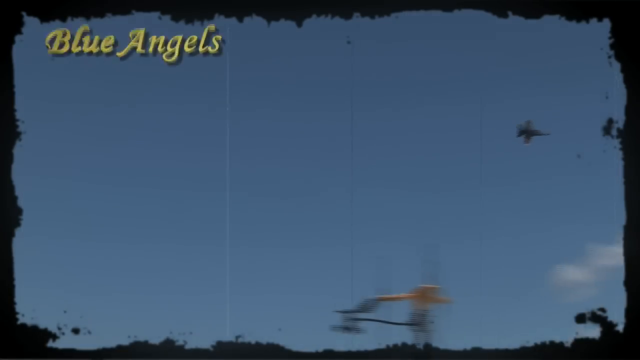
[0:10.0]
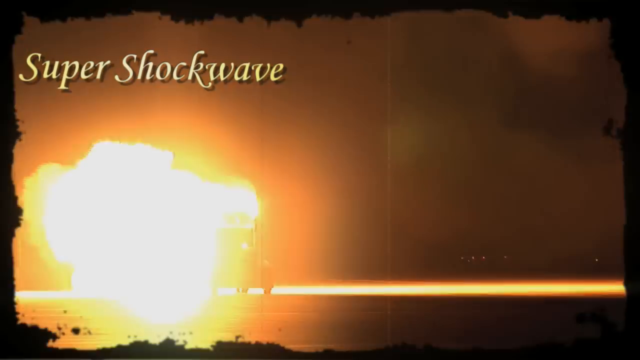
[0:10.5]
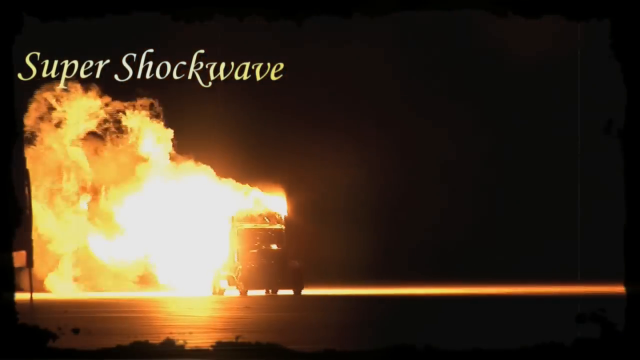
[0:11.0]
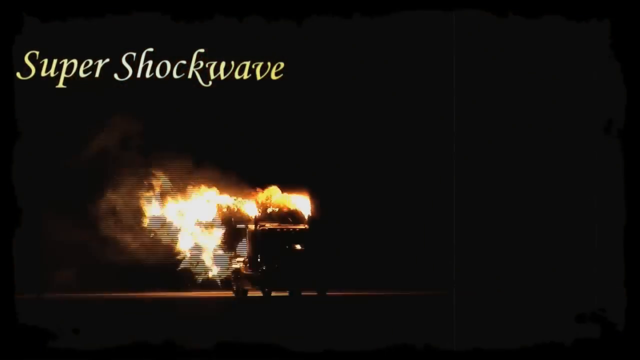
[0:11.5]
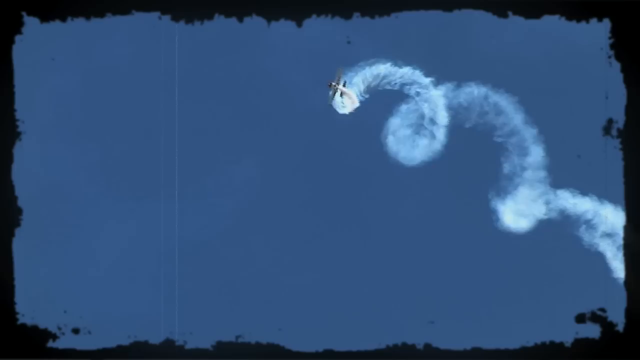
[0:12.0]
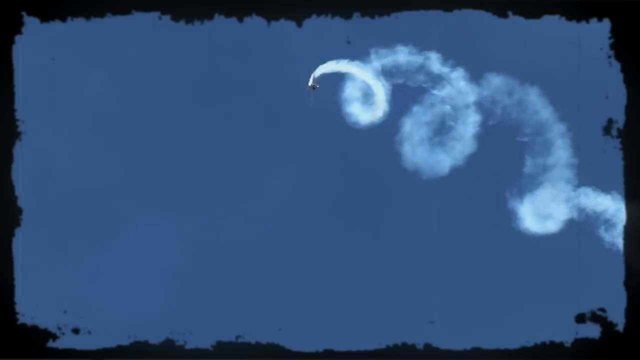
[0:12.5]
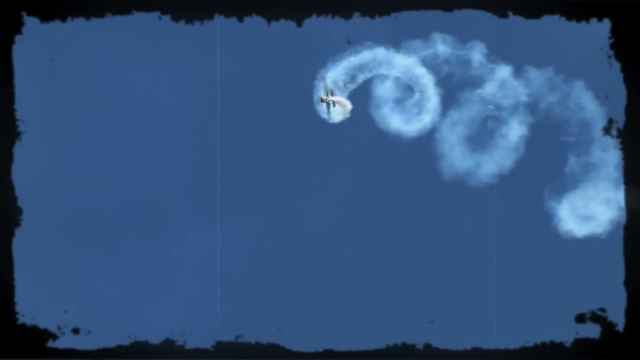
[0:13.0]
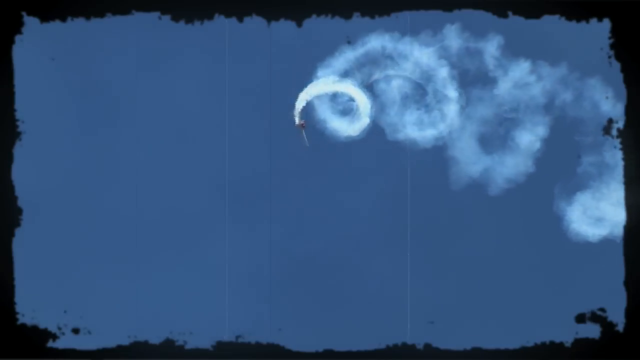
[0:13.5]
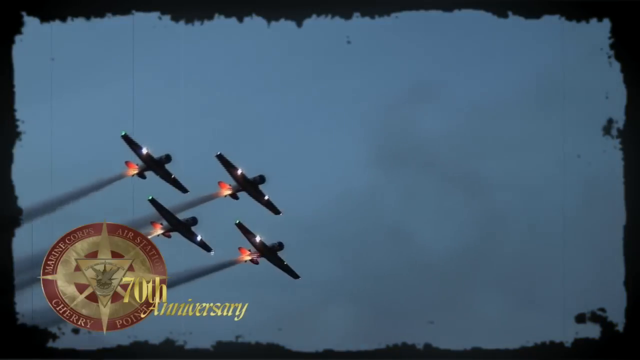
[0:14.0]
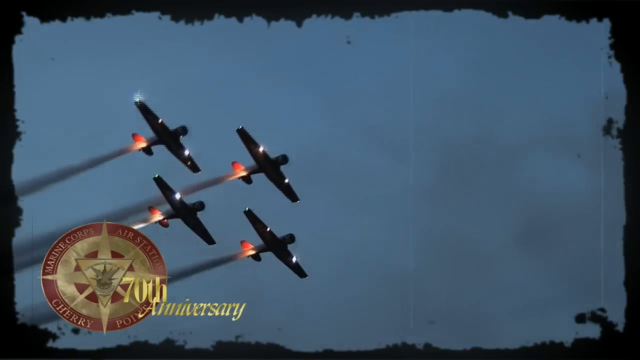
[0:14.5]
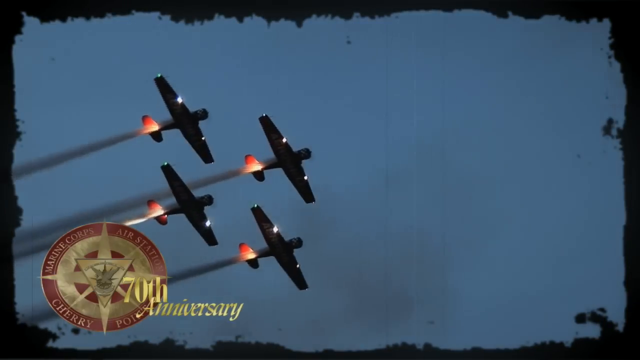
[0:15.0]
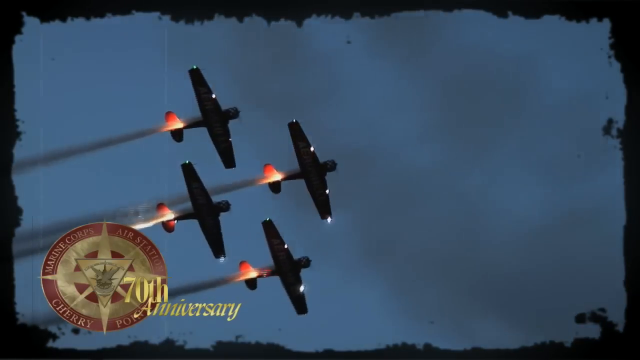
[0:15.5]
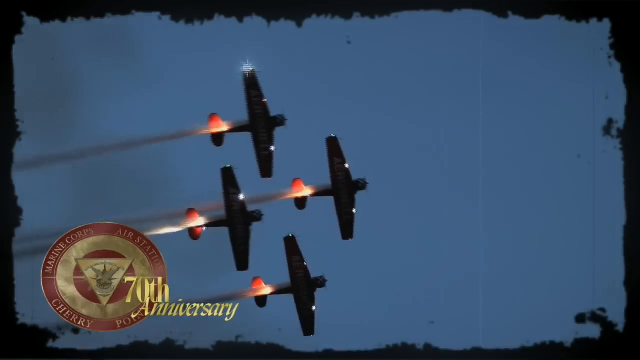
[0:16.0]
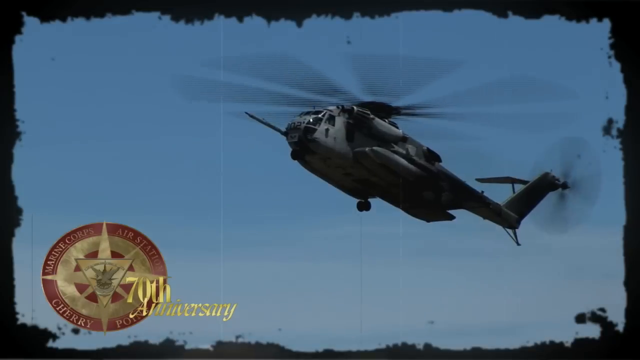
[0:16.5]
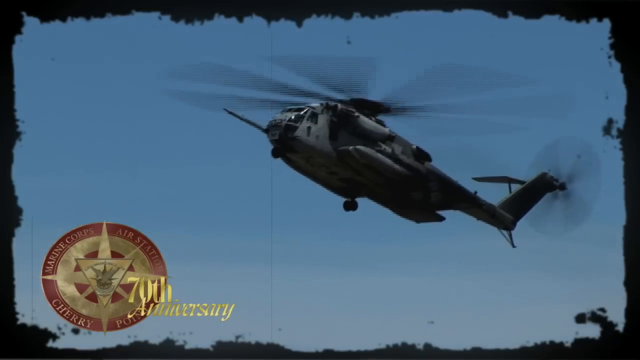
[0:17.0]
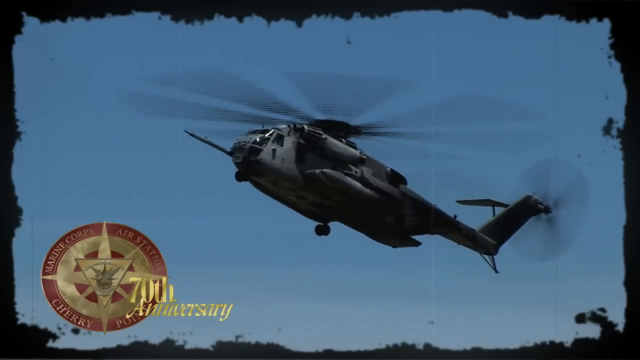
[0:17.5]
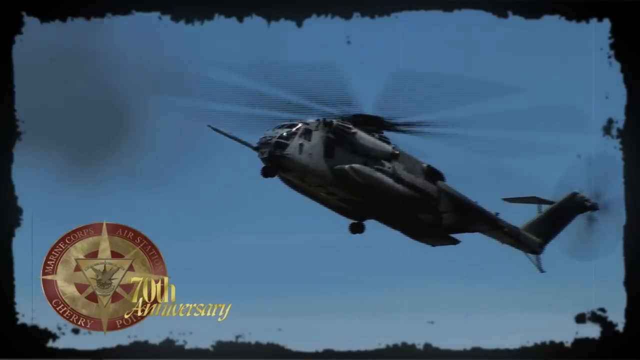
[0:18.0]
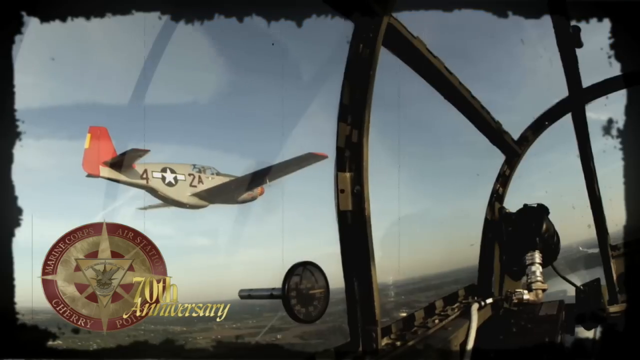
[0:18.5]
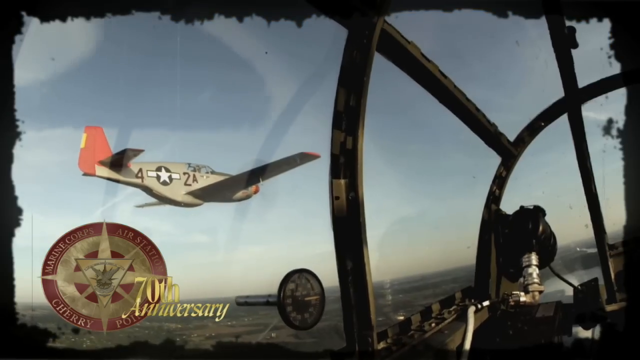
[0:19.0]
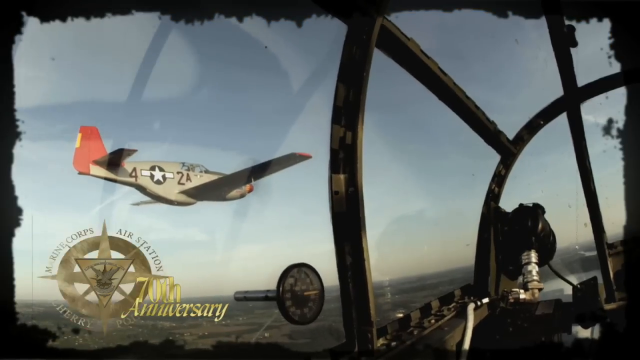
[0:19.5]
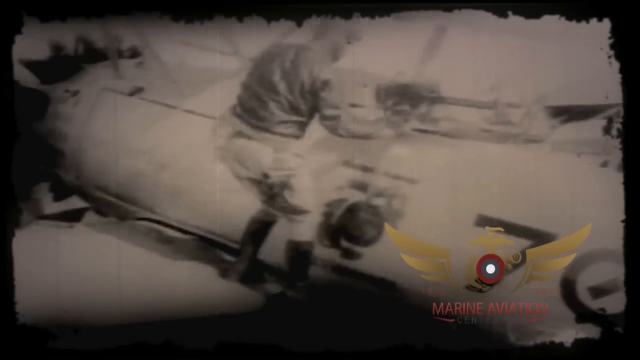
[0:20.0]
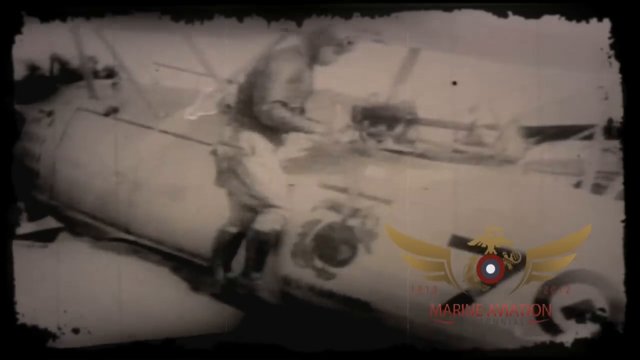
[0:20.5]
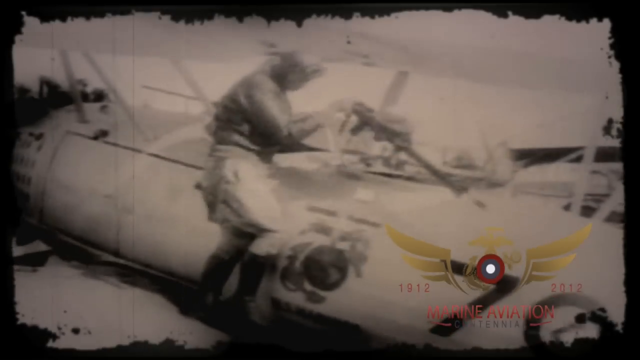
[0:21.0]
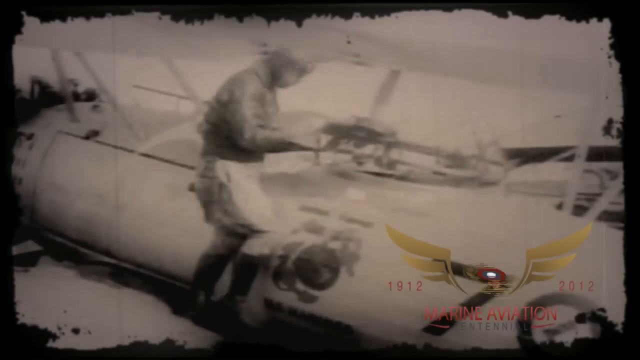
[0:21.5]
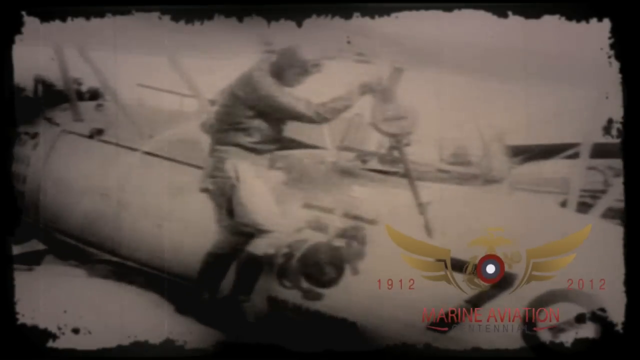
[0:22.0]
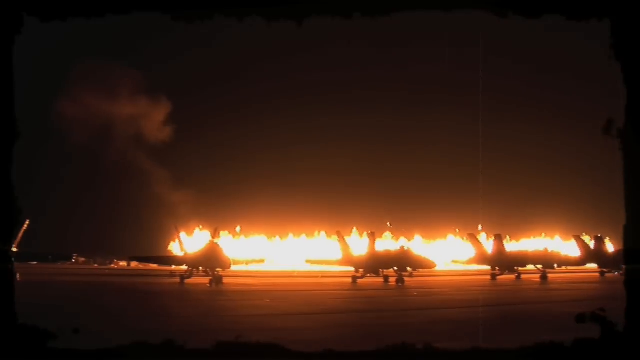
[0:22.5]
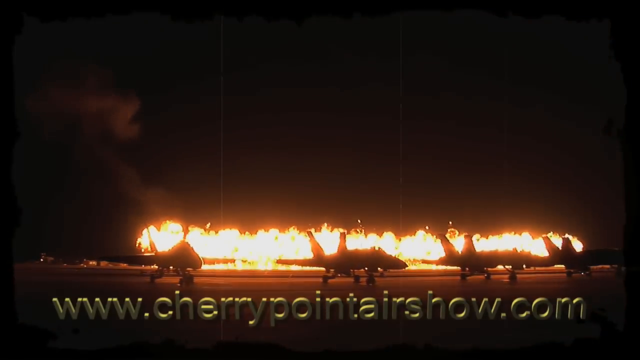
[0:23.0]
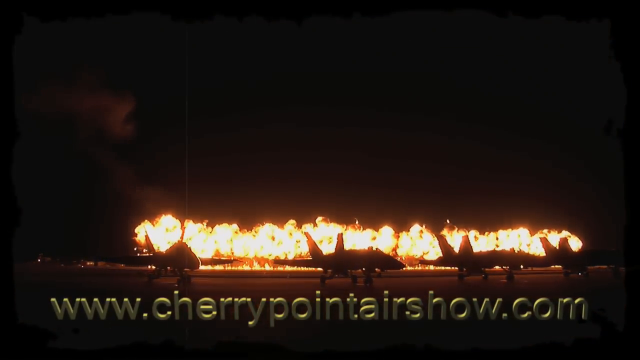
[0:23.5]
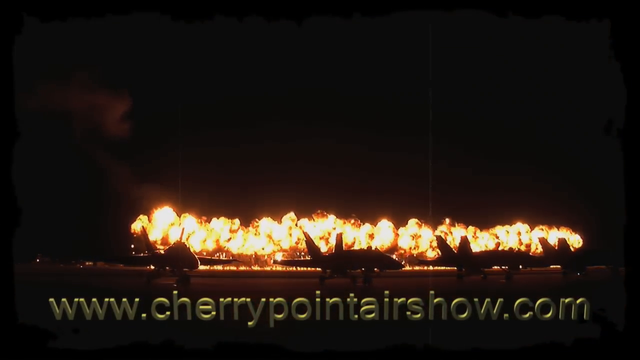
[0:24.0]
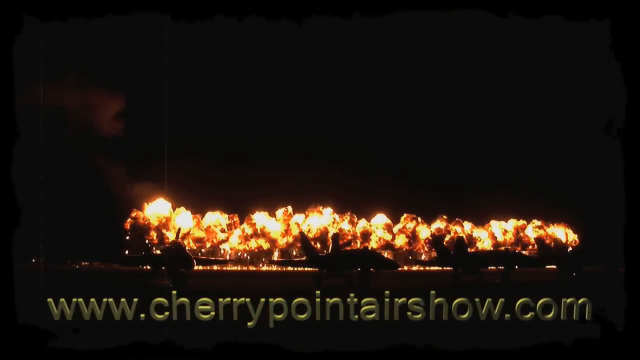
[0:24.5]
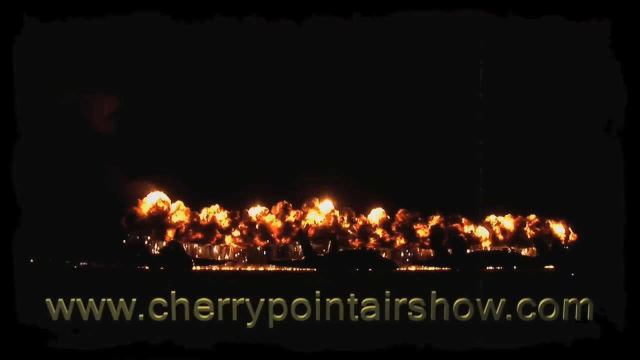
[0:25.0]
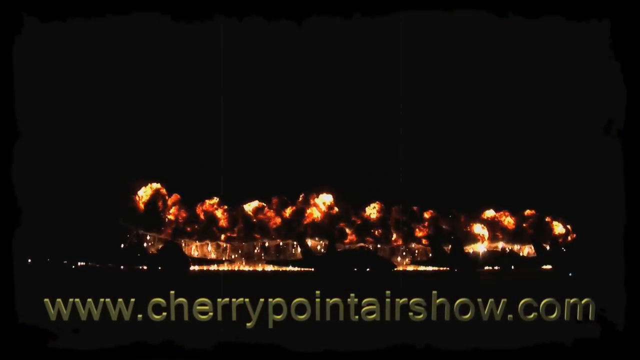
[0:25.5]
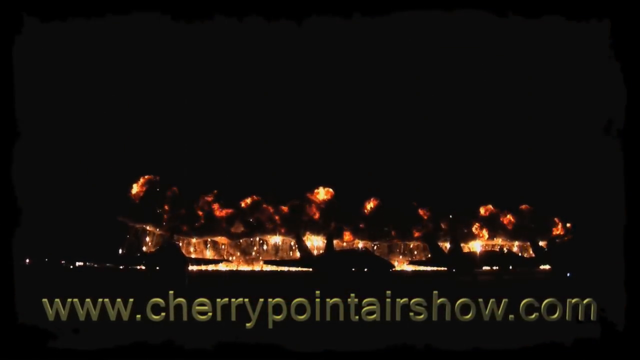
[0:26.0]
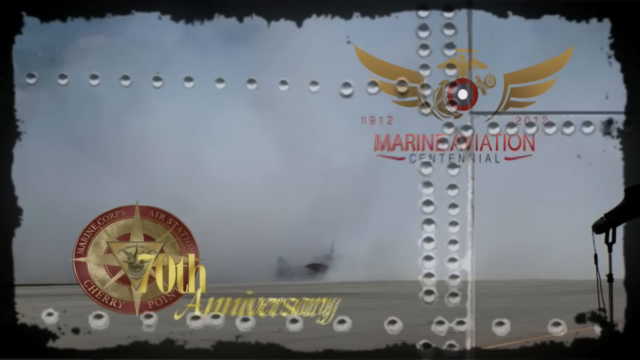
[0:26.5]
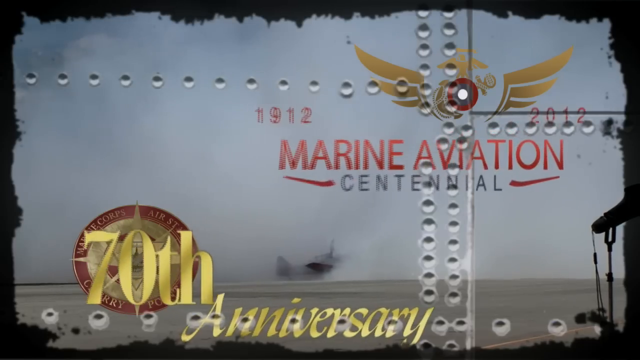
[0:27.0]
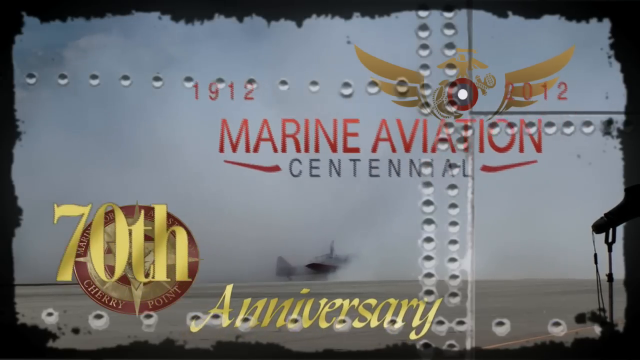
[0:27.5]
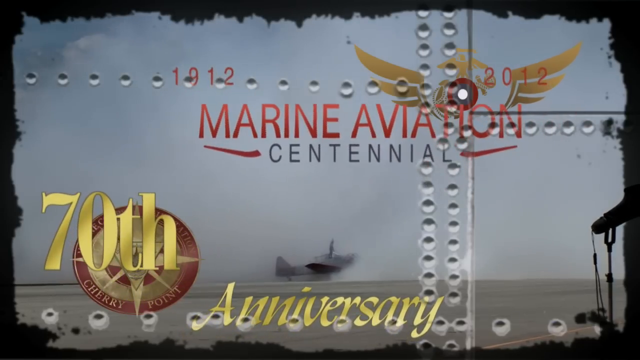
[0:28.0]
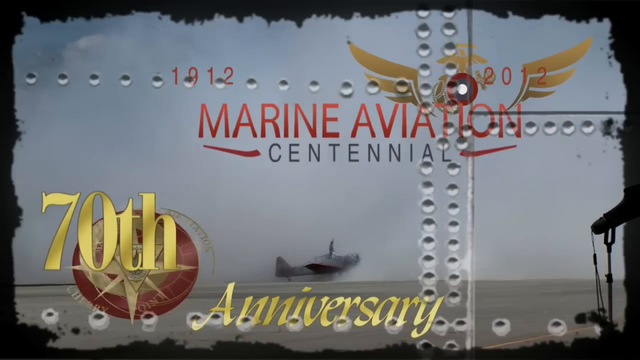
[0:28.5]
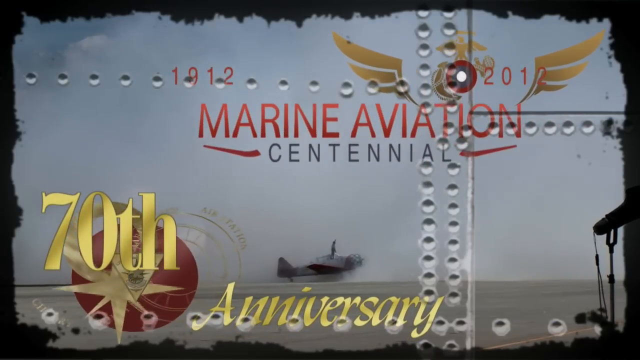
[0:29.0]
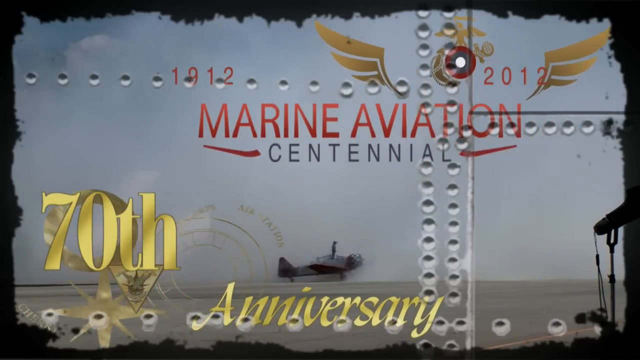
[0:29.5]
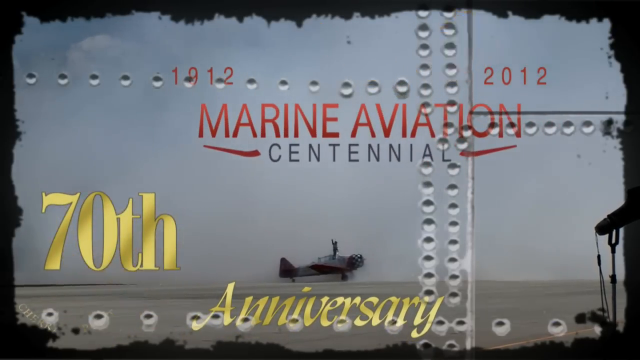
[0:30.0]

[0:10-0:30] Again, the young girl in the yellow dress runs through a backyard with grass and a yellow slide beside her, carrying an American fighter plane in her right hand. A caption appears on the screen reading "Celebrate the Heritage," and another at the bottom reads "Cherry Point Airshow," so this appears to be a promotional video for something called the Cherry Point Airshow. The scene switches to actual American fighter jets in the sky doing various loop the loops and strange manoeuvres, with a caption reading "Blue Angels." A caption reading "Super Shock Wave" follows, with pilots doing circles in the sky. Next, a seal reads "Cherry Point Marine Corps Airshow" as a whole squadron of airplanes flies through the sky in formation. What looks like a military helicopter and fighter jets appear in the sky, and then fireworks go off in the background with some planes in the foreground on a landing strip. Finally, text reads "70th Anniversary of the Cherry Point Airshow" and "1912 to 2012."